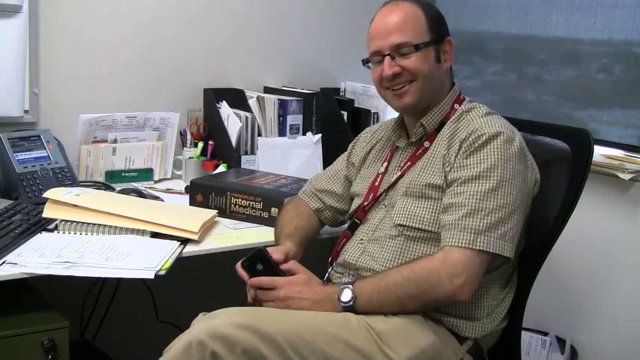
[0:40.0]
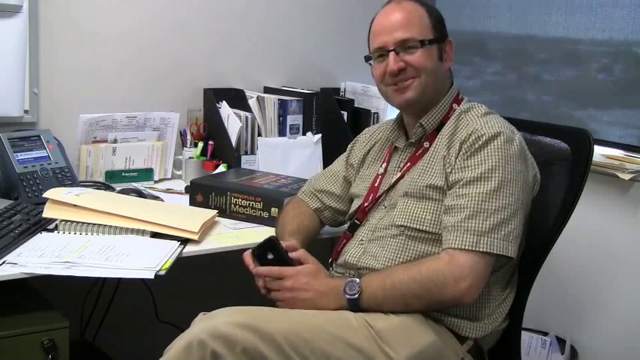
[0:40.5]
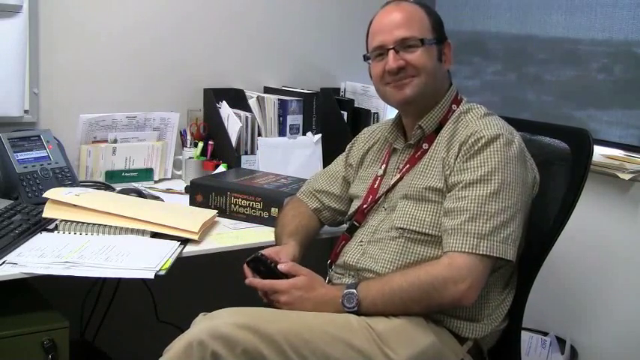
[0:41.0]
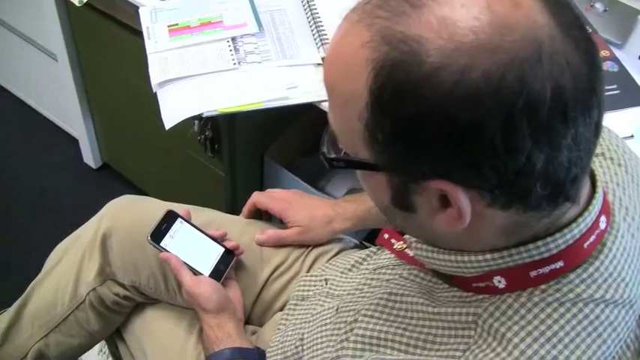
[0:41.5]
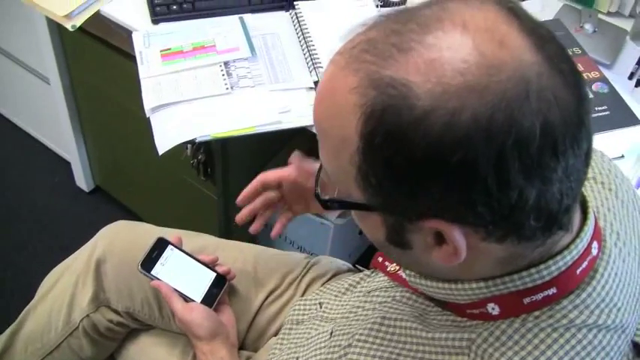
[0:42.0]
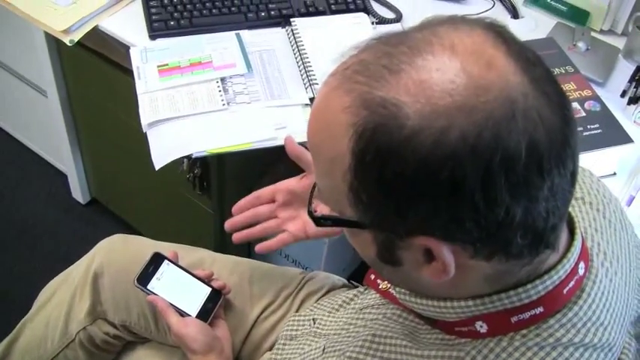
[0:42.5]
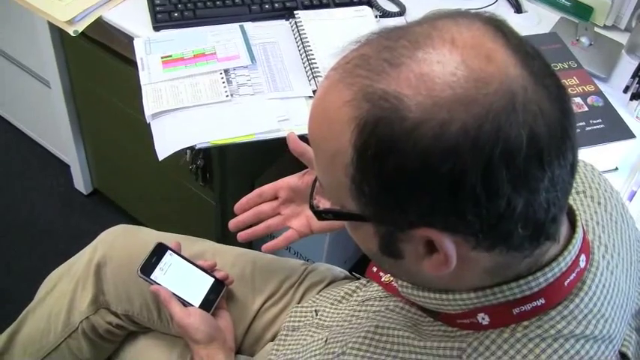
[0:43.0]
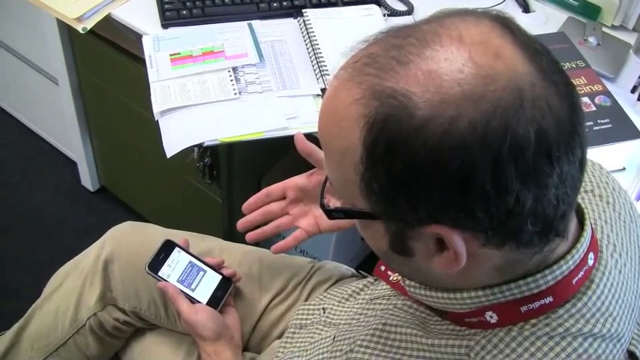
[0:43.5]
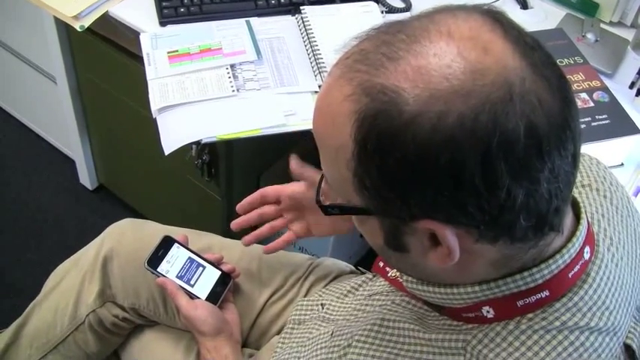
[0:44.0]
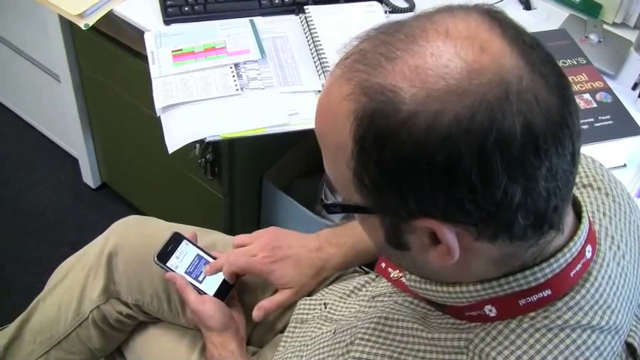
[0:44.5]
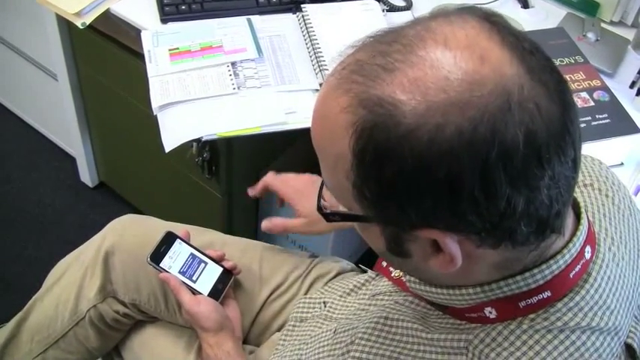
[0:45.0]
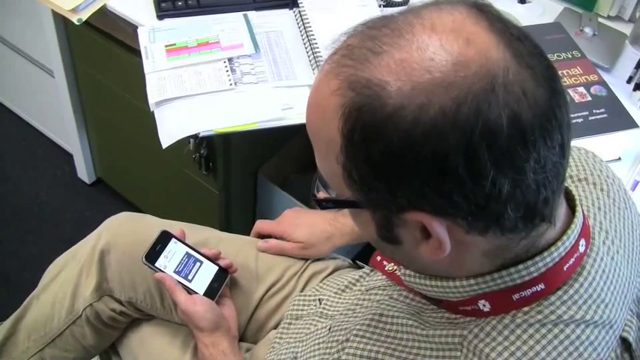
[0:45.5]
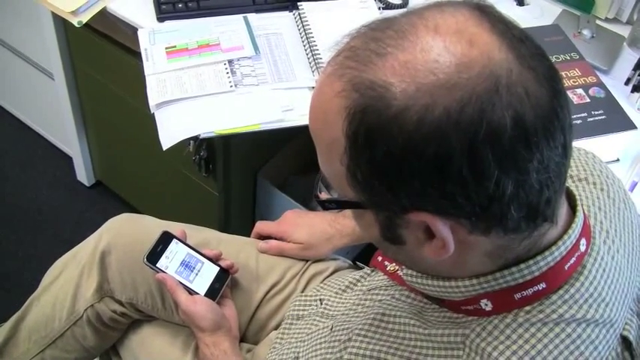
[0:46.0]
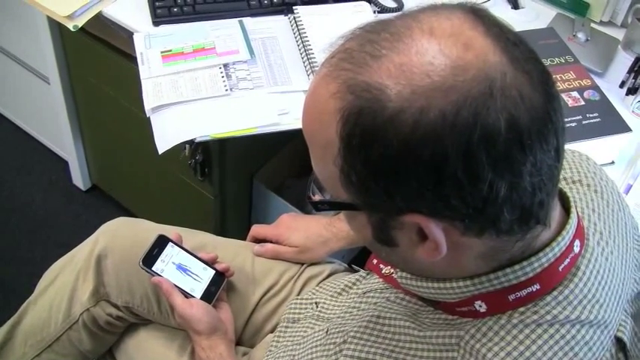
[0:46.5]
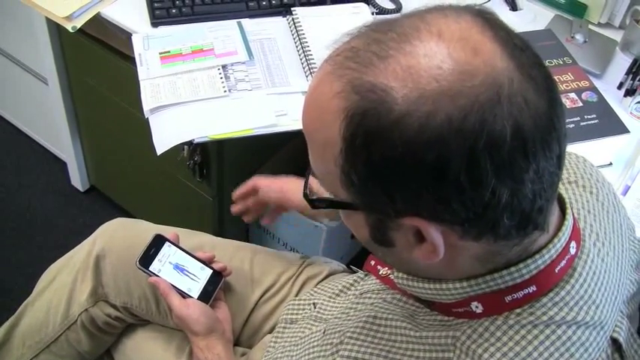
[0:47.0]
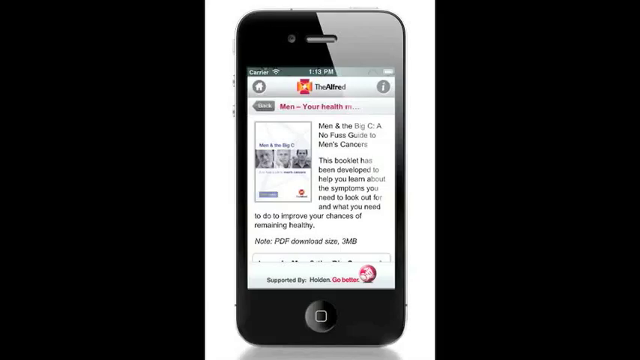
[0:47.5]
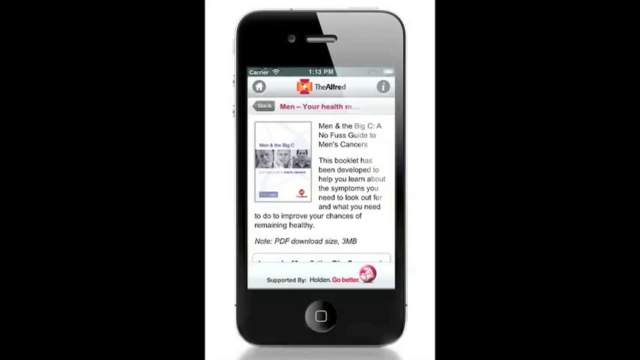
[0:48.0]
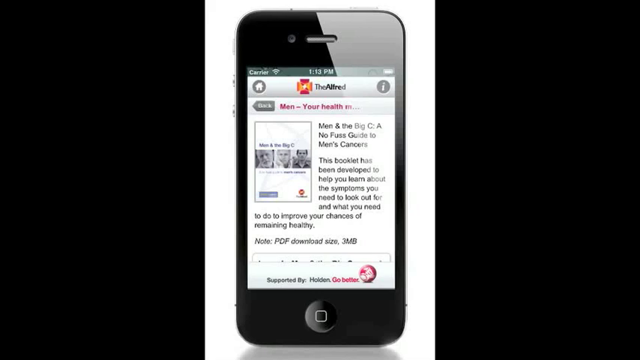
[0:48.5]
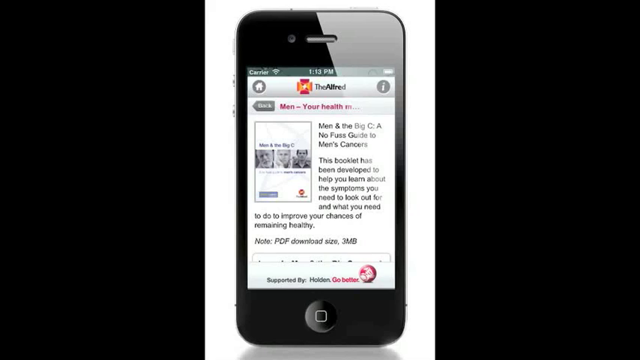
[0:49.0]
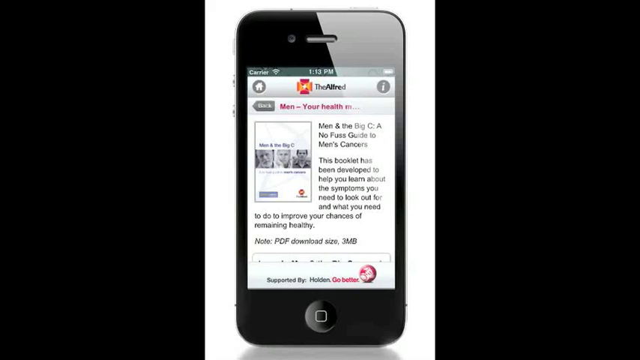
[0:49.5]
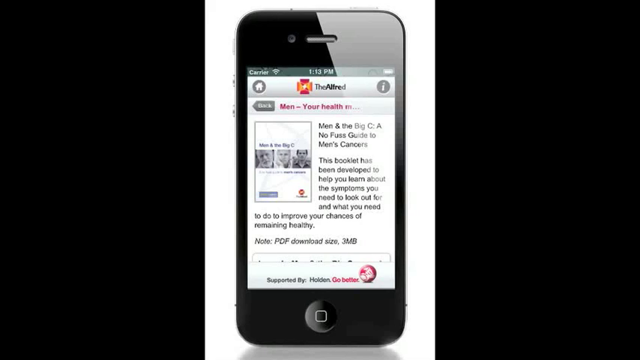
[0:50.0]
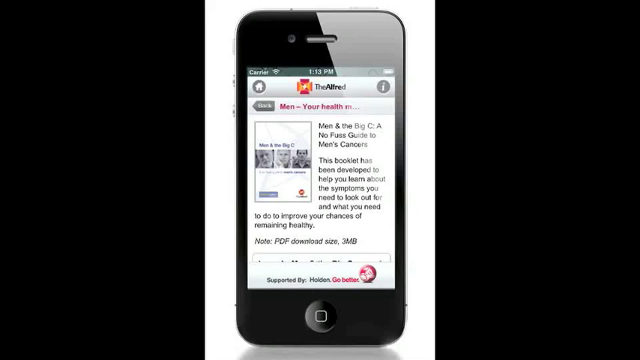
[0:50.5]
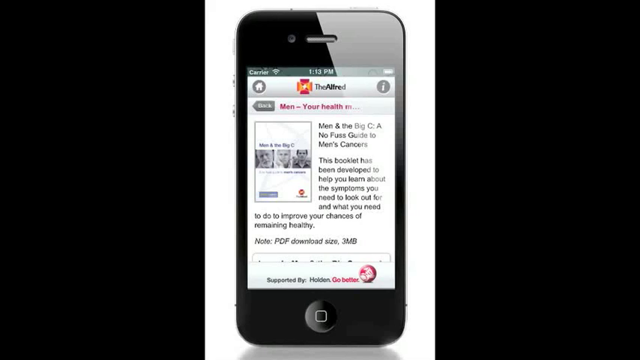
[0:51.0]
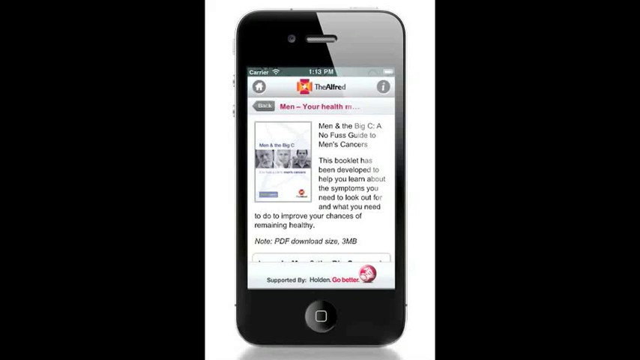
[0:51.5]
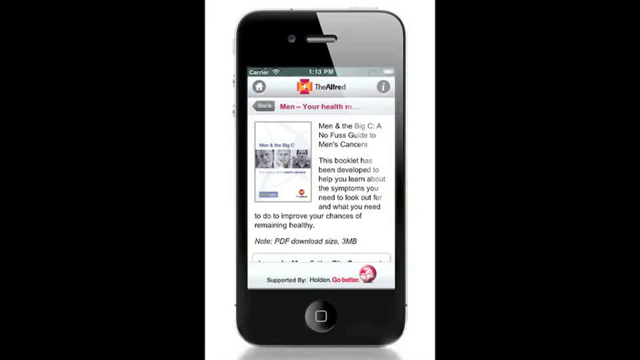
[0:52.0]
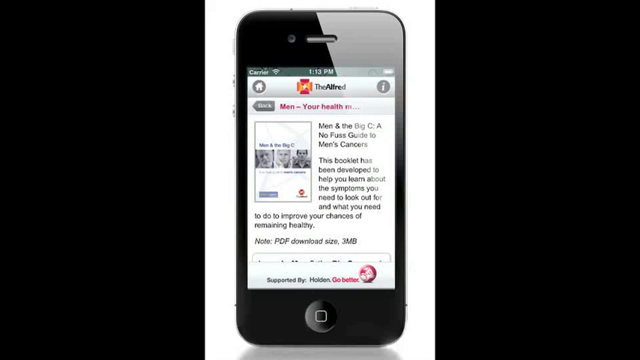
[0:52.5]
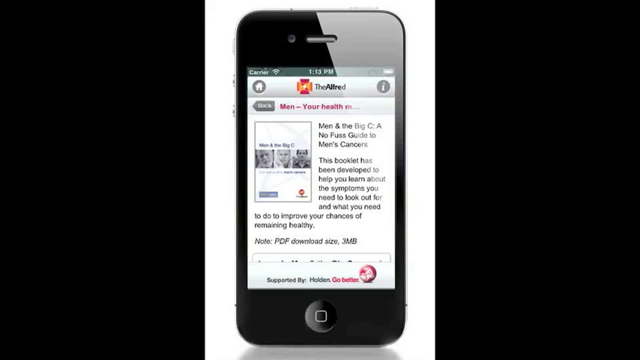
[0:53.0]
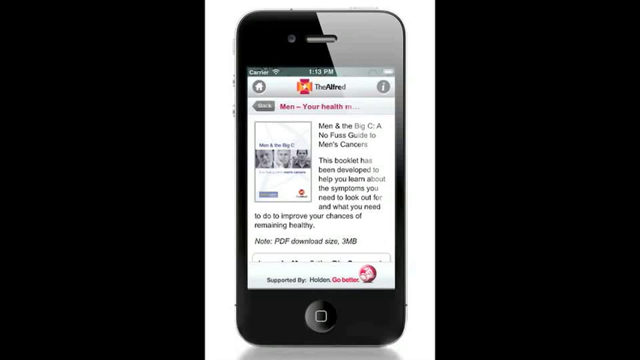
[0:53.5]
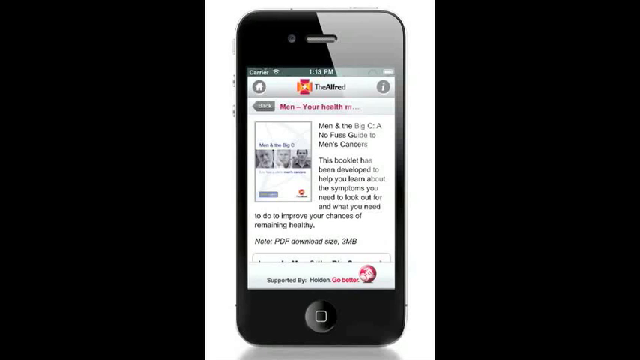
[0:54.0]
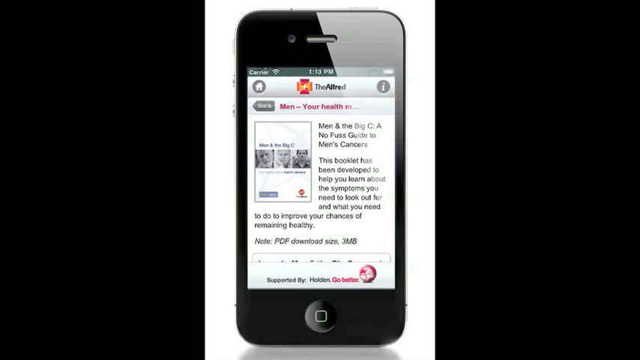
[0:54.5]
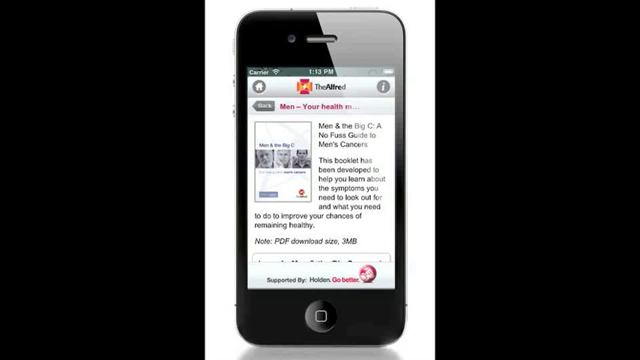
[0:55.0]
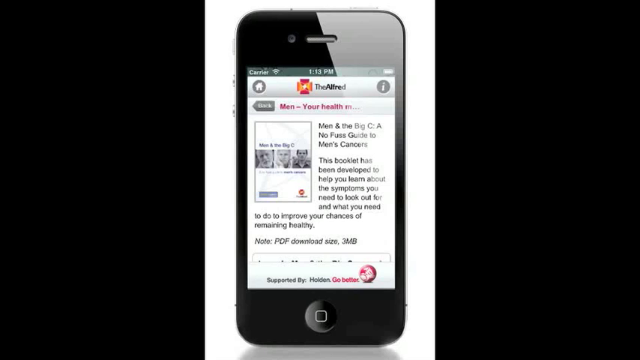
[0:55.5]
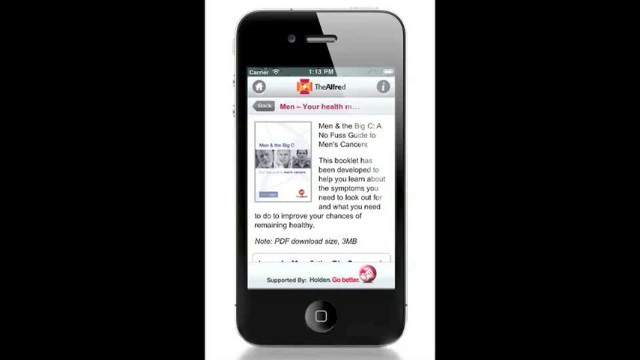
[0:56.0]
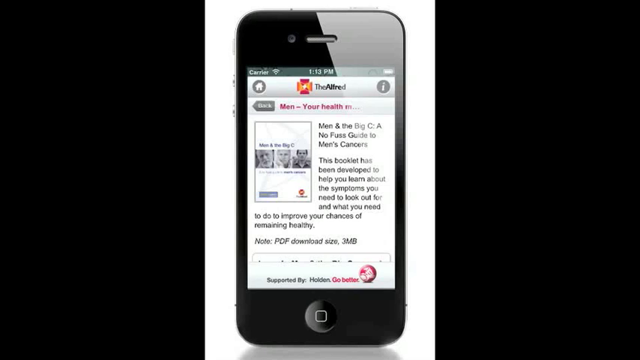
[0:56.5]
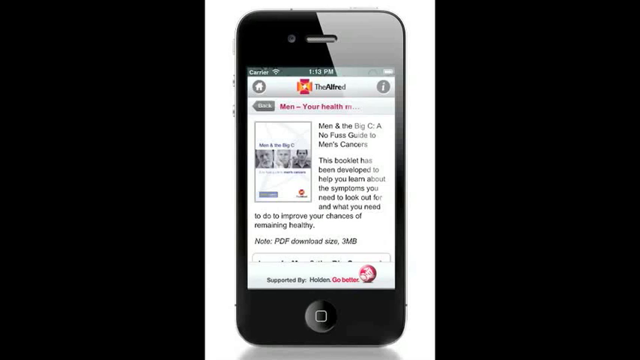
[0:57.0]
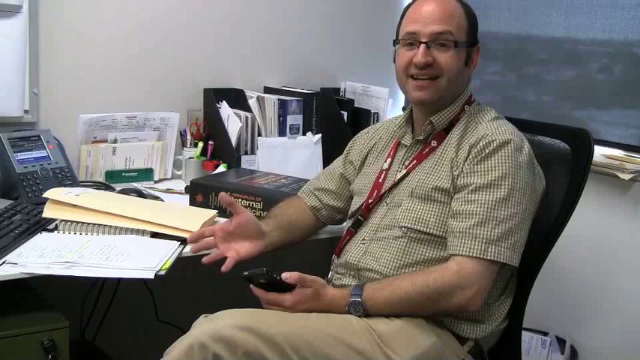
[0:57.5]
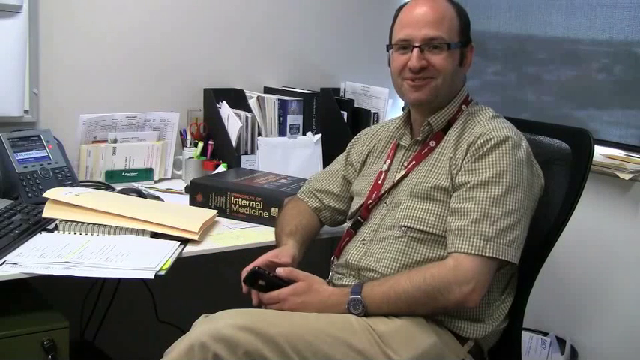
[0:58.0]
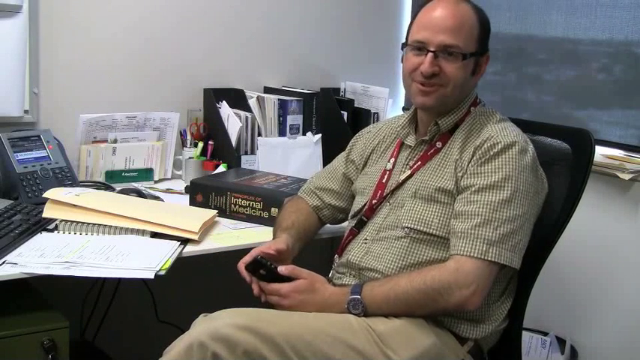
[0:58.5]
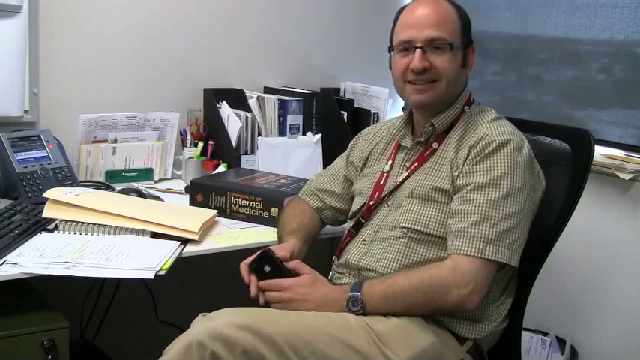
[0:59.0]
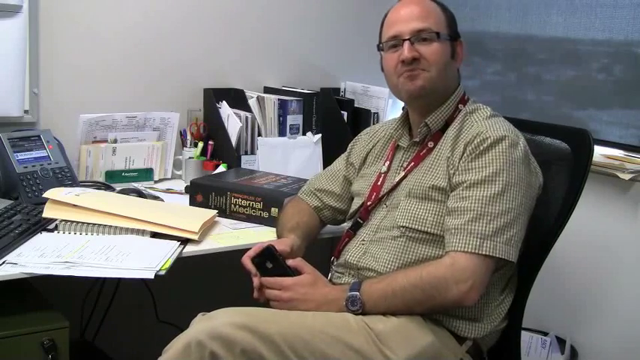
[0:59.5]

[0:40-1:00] In an office-like setting, the man sits in a black chair with both hands on his black iPhone and a watch on his left wrist. He wears jeans or pants of an arguably brownish color, a green and white checkered shirt and a red lanyard around his neck. He has a white skin tone, is balding, and is in his 30s or 40s. In front of him, to the viewer's left, is a desk with a telephone, a keyboard, some papers and books. He nods his head and smiles. An aerial top-down view shows him sitting in his chair looking at his phone; with his right hand open-palmed he points at the phone before pressing a button on it with his right finger. The scene changes to an image of a mobile phone showing the Alfred website, where the current category is "men, your health matters". Underneath is black text reading "men and the big C, a no-fuss guide to men's cancers", and to the left is a small vertical rectangular image containing three images of men. The static image of the Alfred website remains on screen.